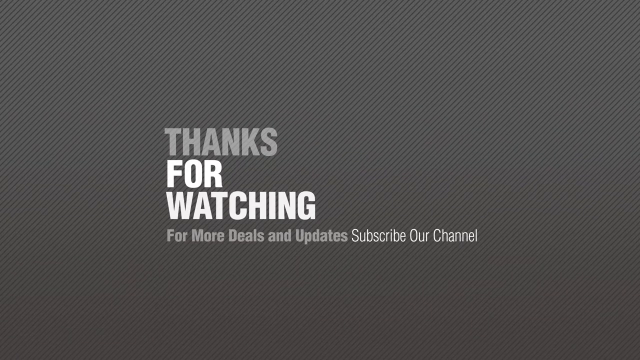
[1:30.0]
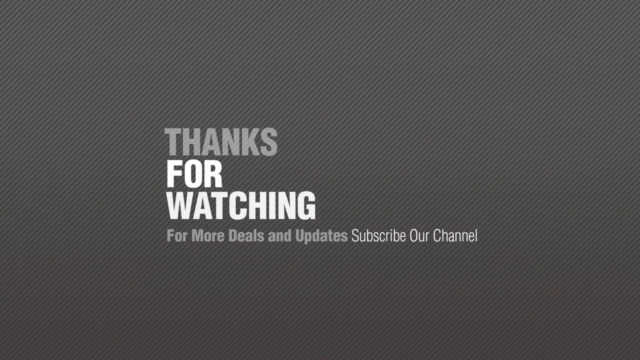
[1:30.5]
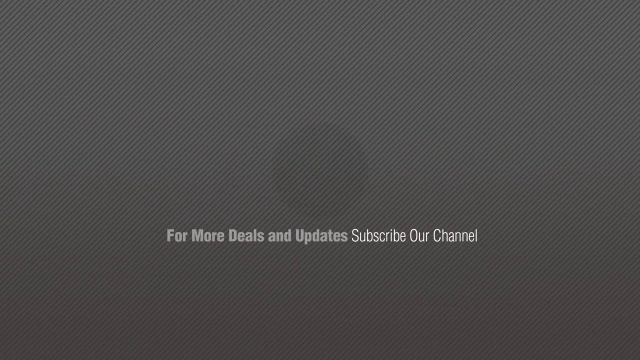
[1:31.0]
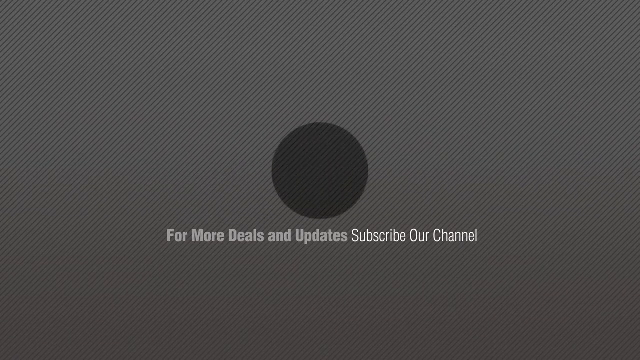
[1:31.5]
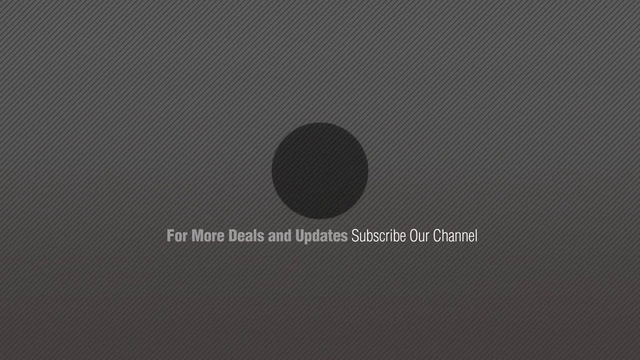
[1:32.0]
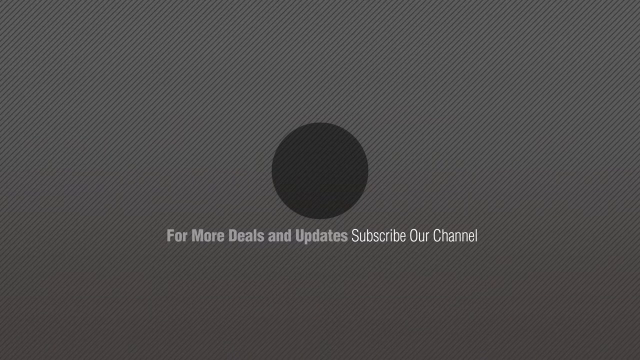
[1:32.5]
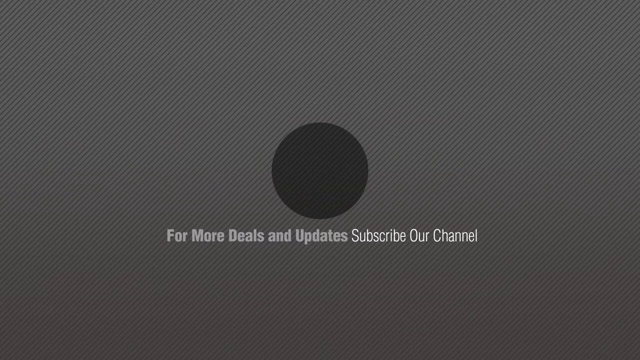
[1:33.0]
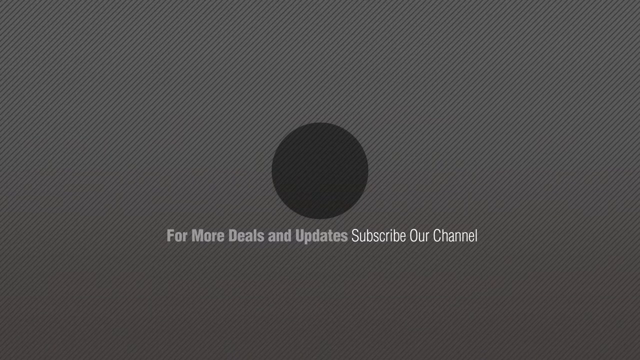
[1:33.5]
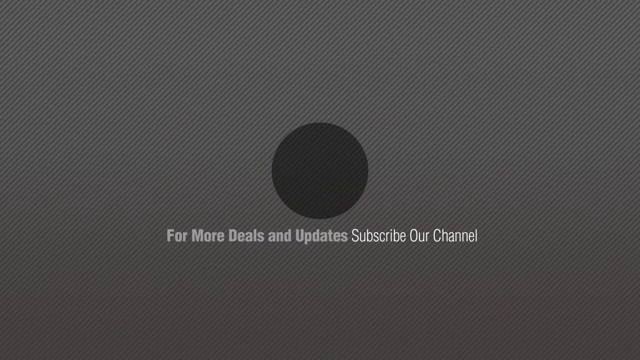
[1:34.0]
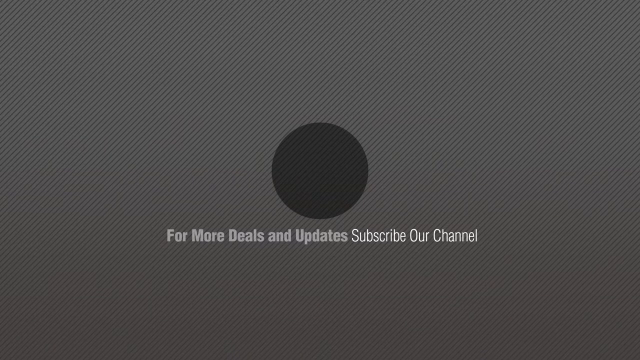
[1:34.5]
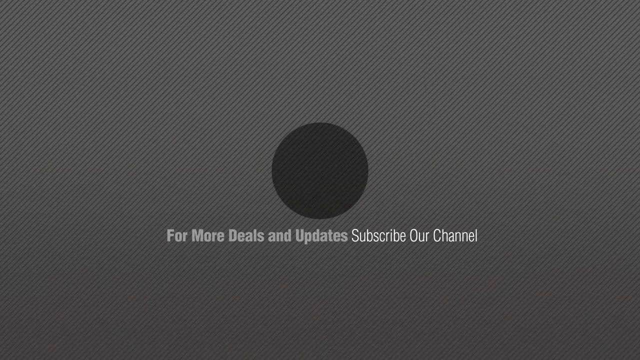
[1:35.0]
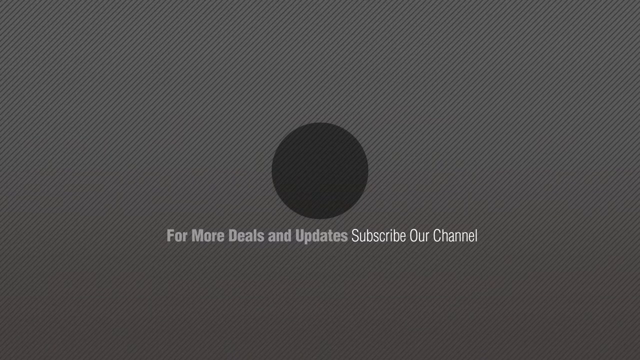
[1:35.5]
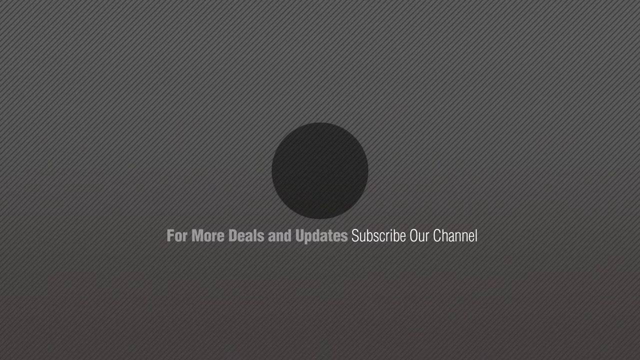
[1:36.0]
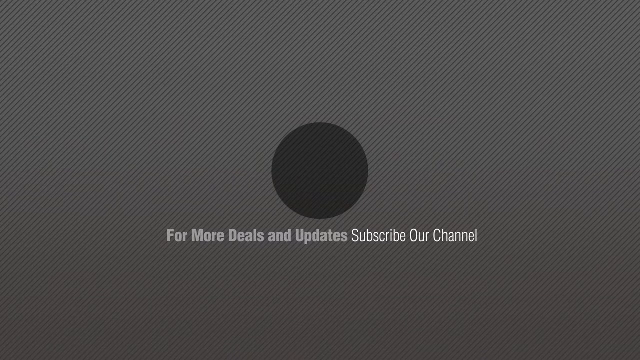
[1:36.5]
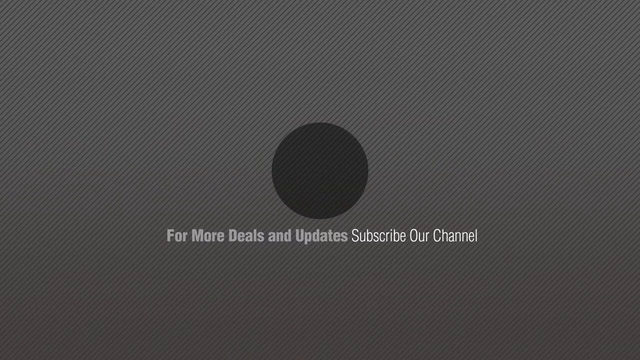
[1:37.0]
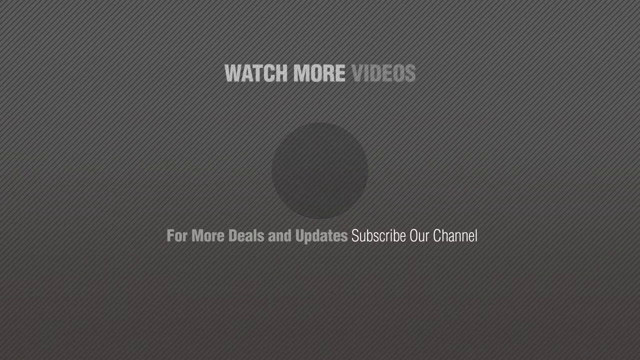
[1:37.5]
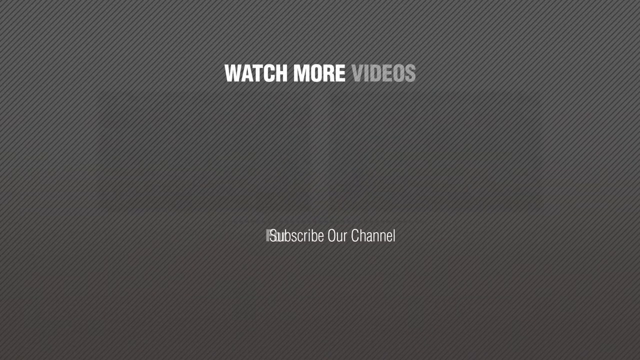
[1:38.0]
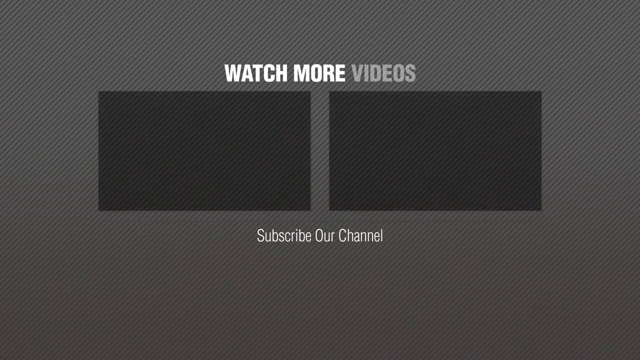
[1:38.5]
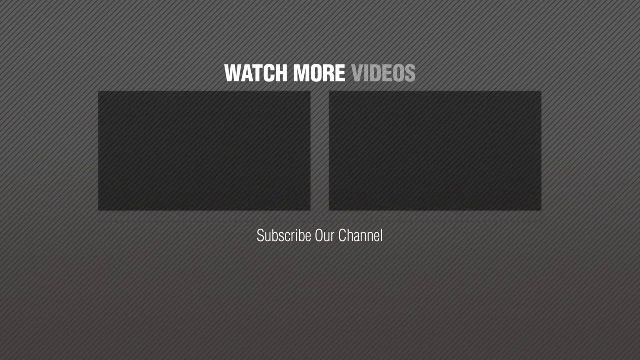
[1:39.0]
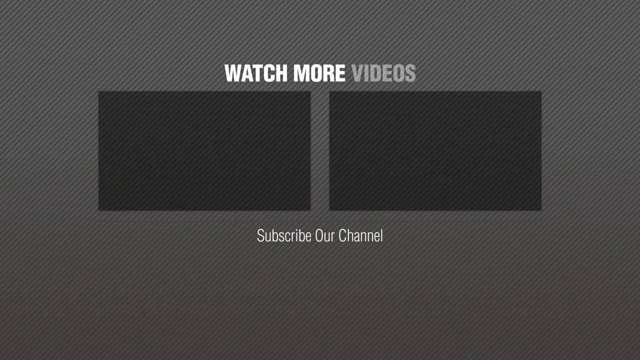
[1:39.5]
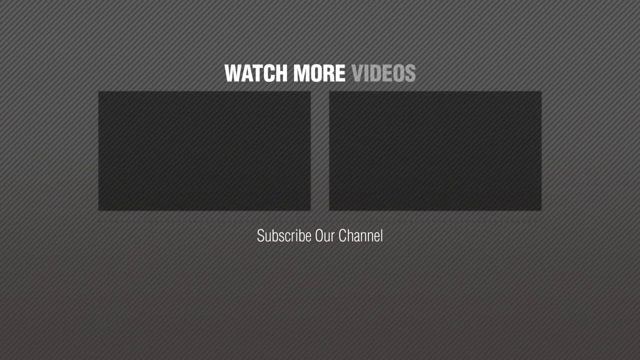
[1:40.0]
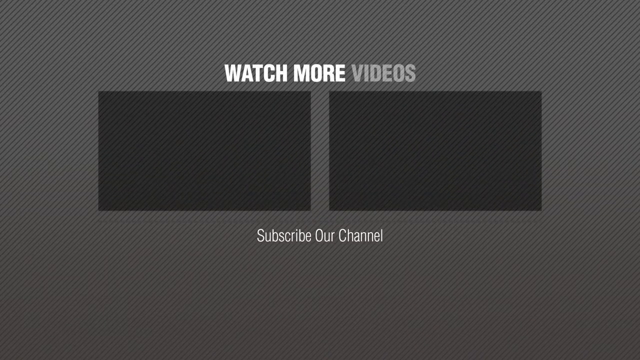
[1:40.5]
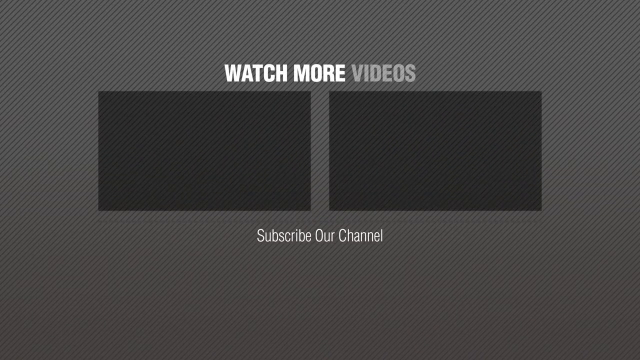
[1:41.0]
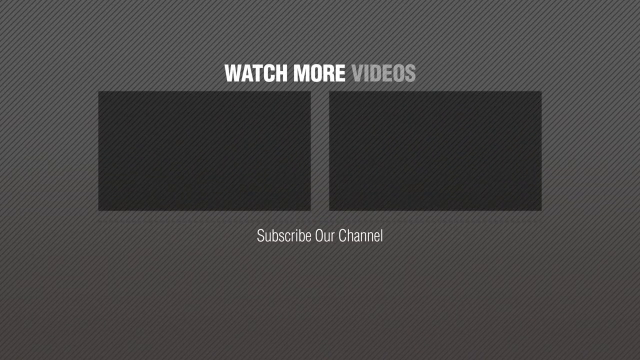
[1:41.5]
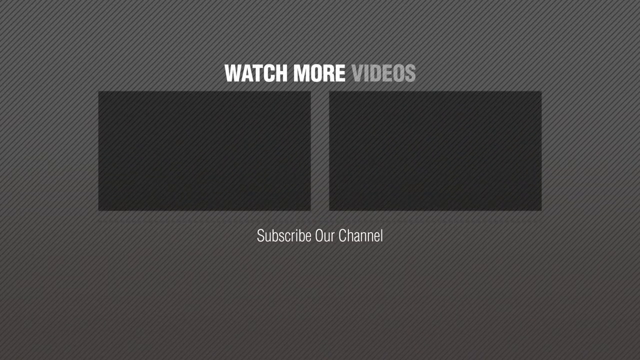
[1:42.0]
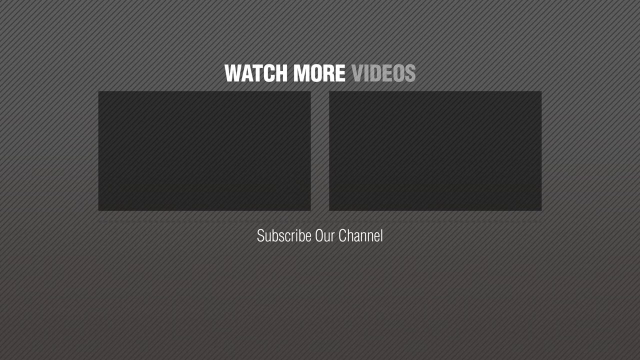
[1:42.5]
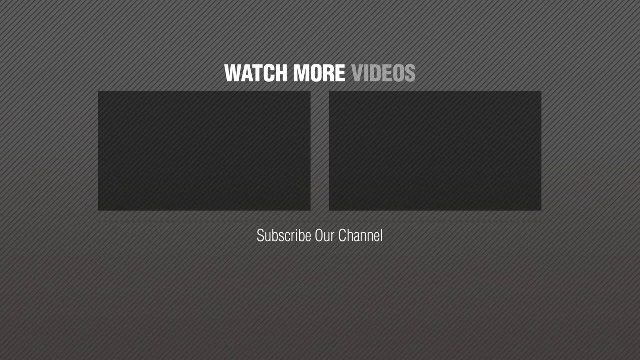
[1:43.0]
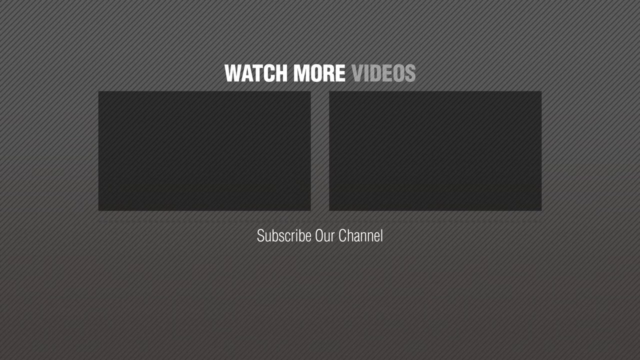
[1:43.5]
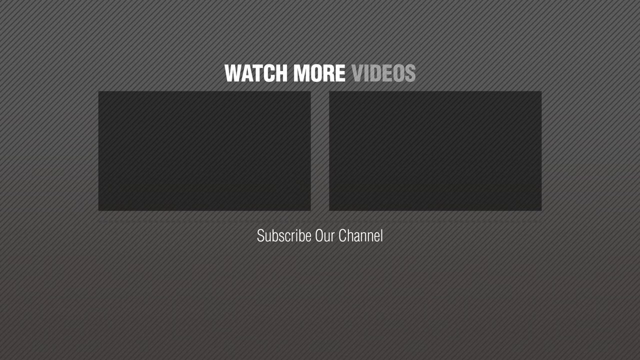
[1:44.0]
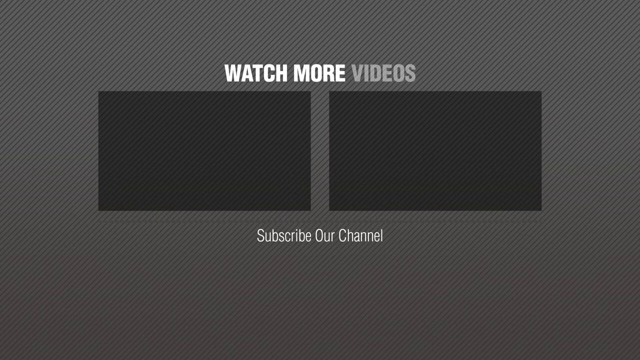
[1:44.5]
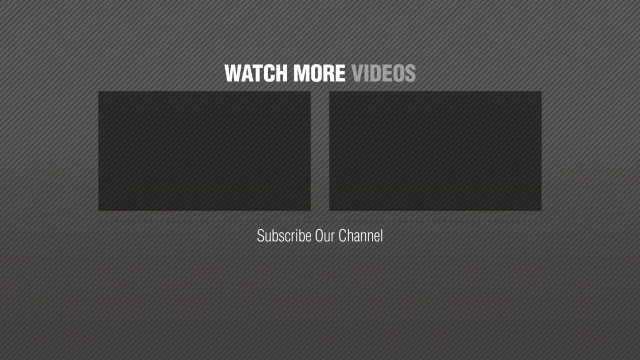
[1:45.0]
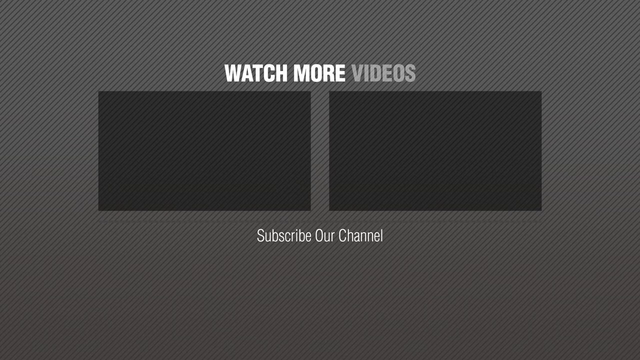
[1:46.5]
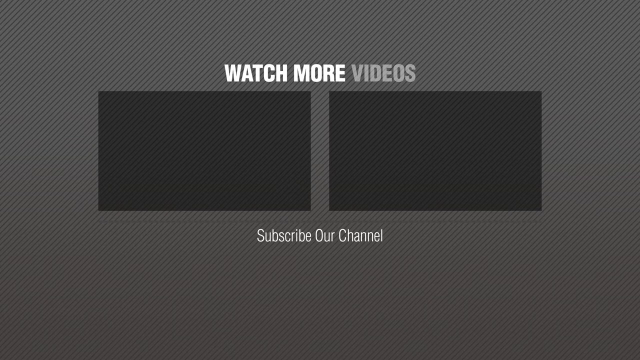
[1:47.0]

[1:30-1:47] An end card appears with thin grey and black stripes running diagonally from bottom left to top right, looking like a woven fabric. In the centre, block capitals say "thanks for watching", with "thanks" in grey and "for watching" in white. Underneath are the words "for more deals and updates, subscribe to our channel", with "for more deals and updates" in grey and "subscribe to our channel" in white. The words disappear and are replaced by a black circle above "for more deals and updates, subscribe our channel". The black circle remains in the very centre of the screen, and the words "watch more videos" appear above it. The circle disappears, and "for more deals and updates, subscribe our channel" also disappears. Two square boxes appear to the left and right below "watch more videos", presumably linking to further videos on the subject.